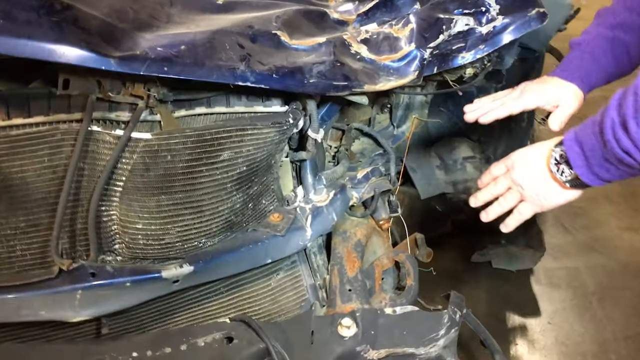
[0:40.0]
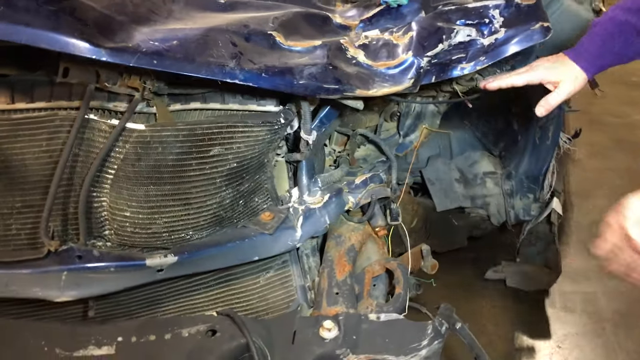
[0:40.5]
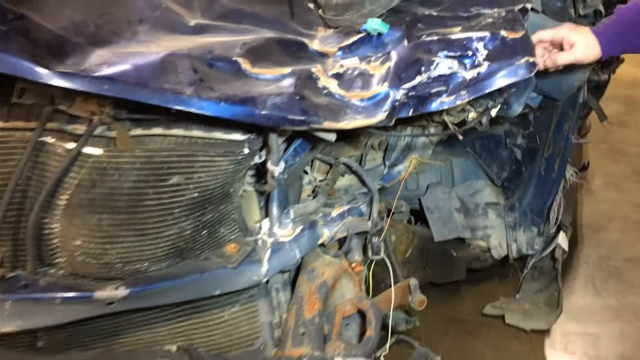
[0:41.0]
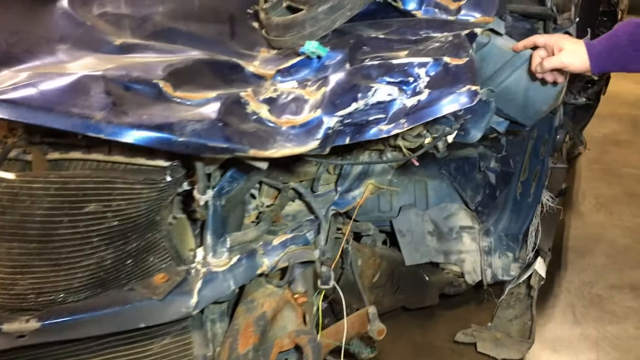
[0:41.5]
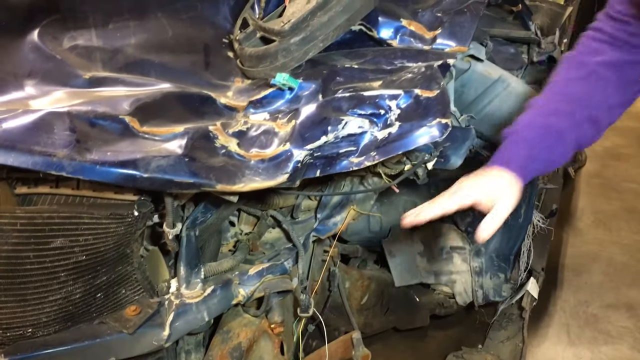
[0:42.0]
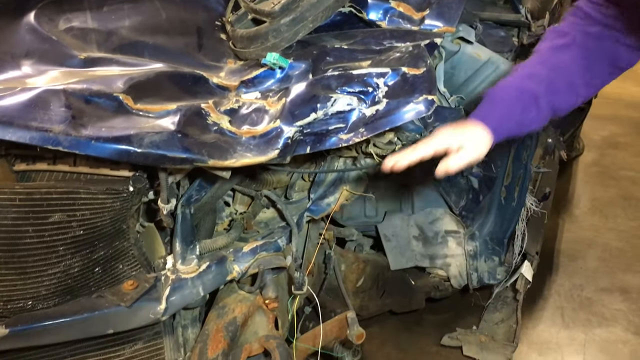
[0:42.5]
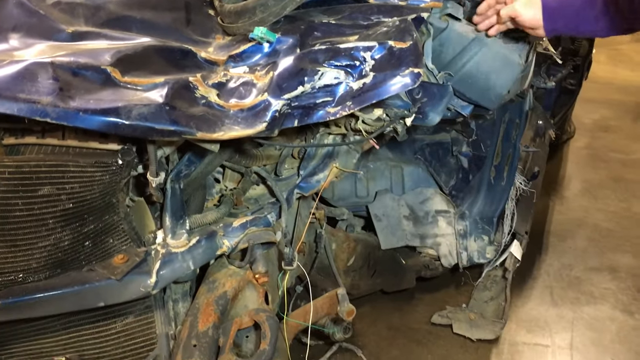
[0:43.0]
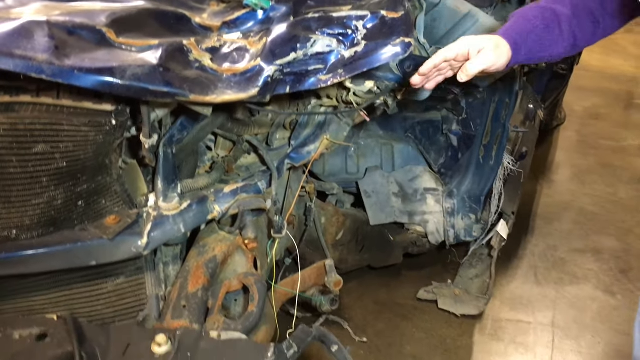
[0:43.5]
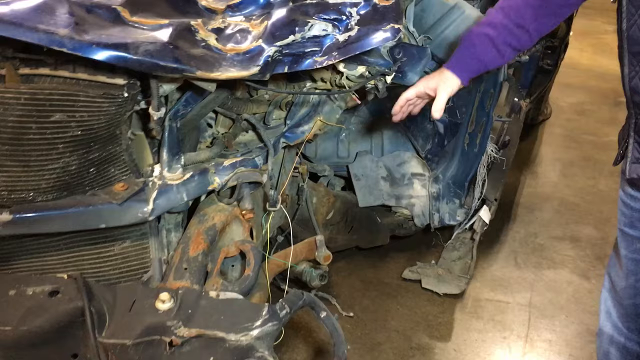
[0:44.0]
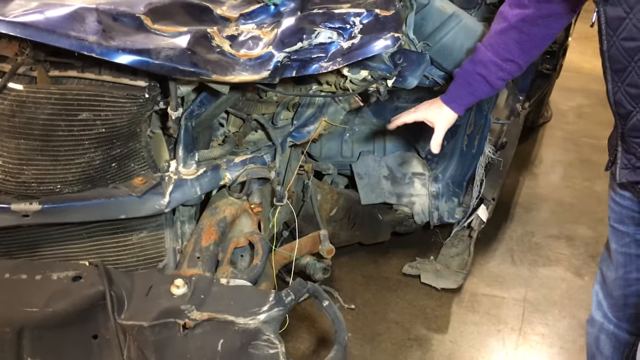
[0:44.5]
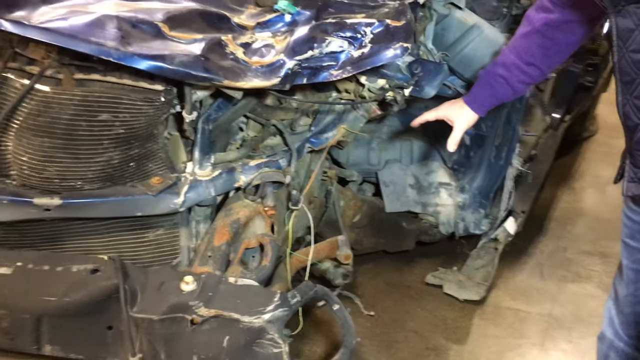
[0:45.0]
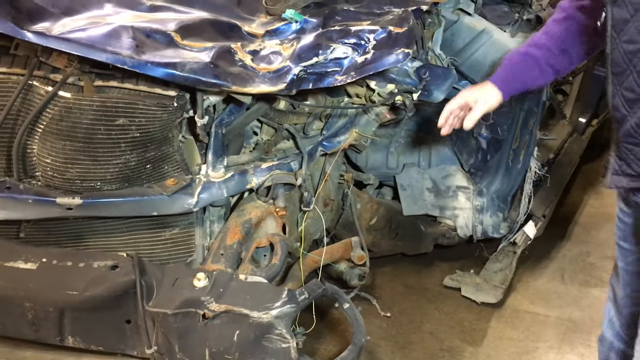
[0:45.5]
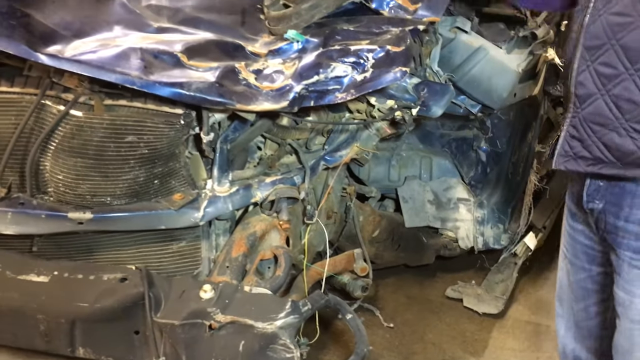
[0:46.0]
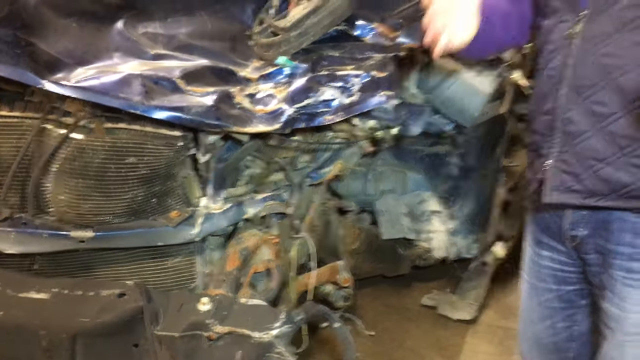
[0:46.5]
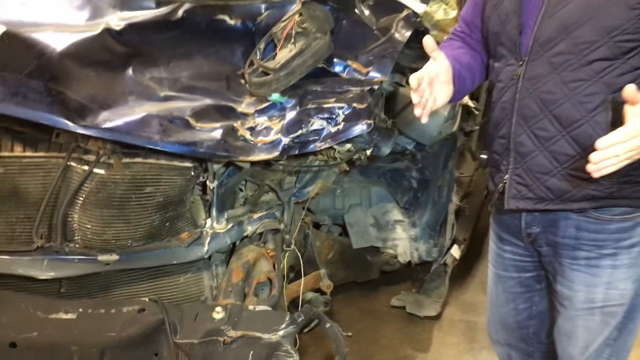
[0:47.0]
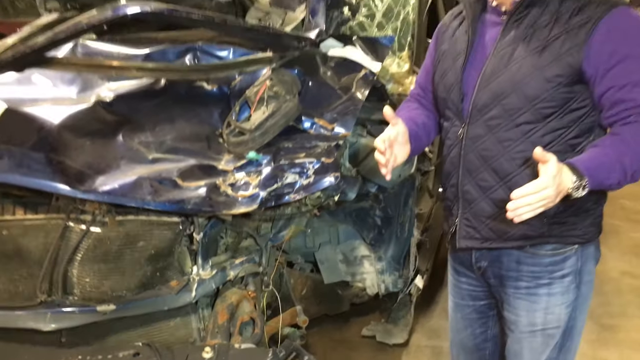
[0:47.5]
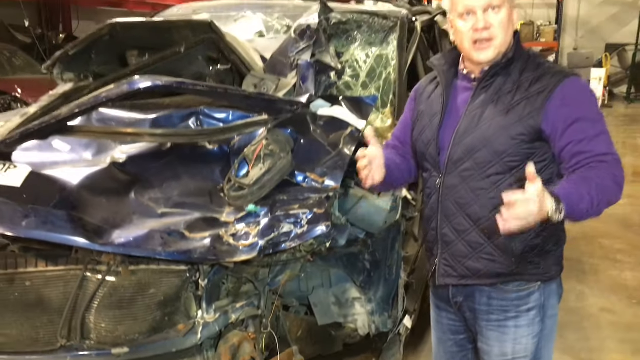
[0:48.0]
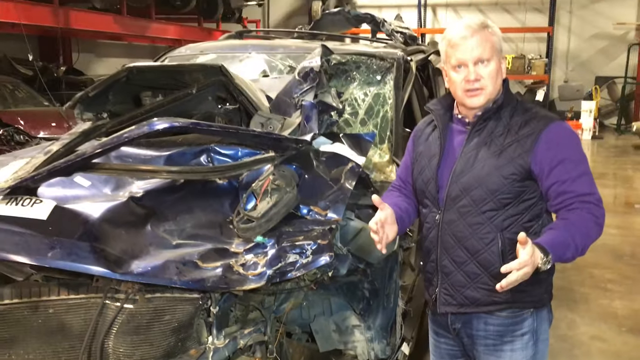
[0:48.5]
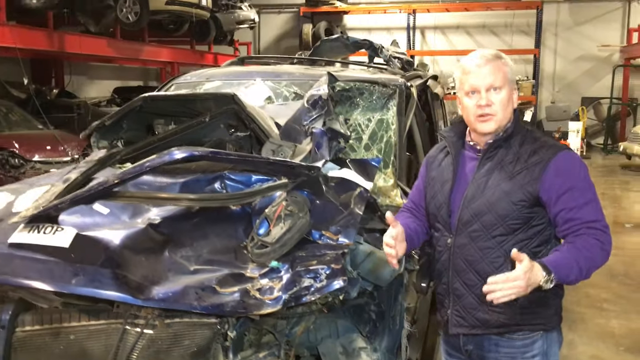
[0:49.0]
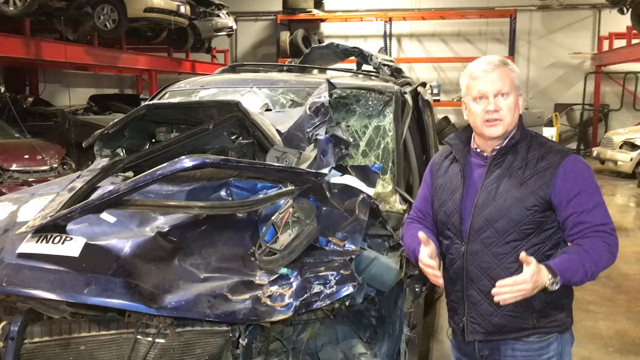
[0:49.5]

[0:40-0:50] The camera is initially quite low as the man points toward the open part of the wheel area where the wheel would be, had it not been damaged and removed. The crumpled blue fender and the damaged grill at the front of the vehicle are visible. As the camera pans back down toward the bottom, only his two hands are seen inside the wheel area. He wears a black banded wristwatch on his left hand.